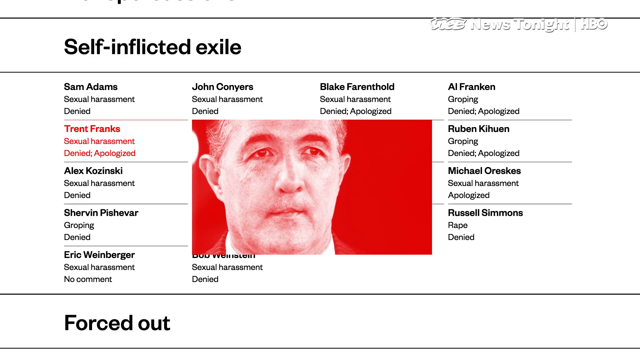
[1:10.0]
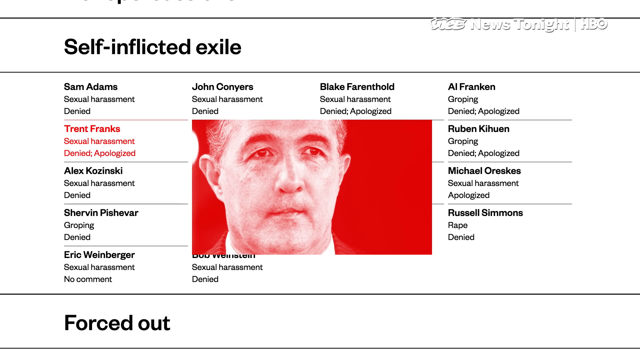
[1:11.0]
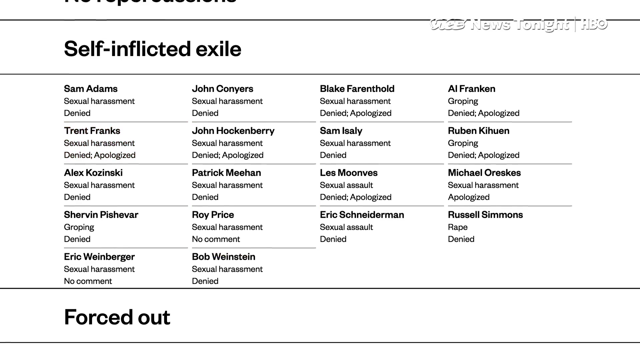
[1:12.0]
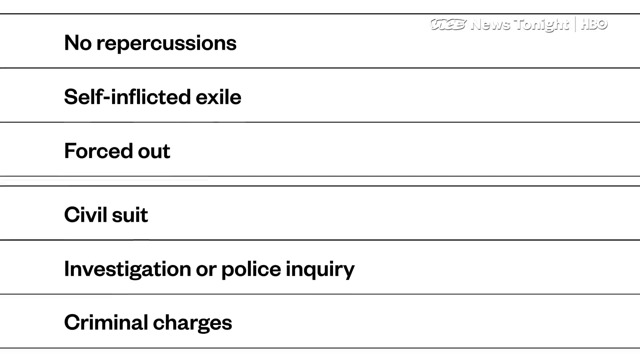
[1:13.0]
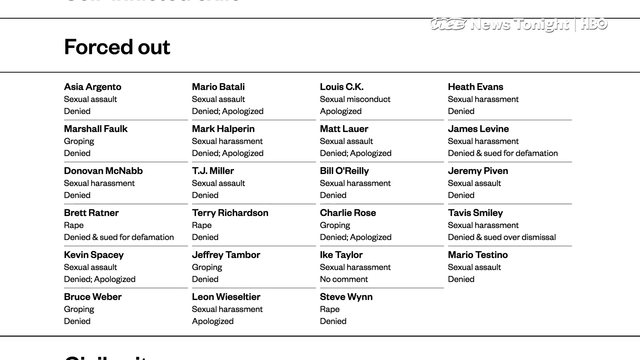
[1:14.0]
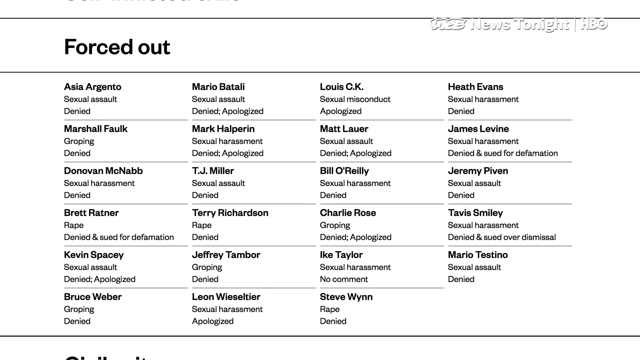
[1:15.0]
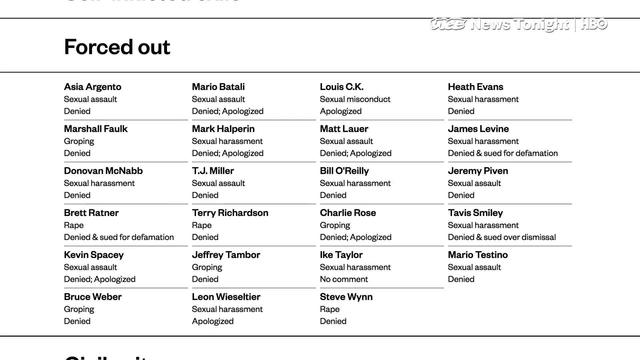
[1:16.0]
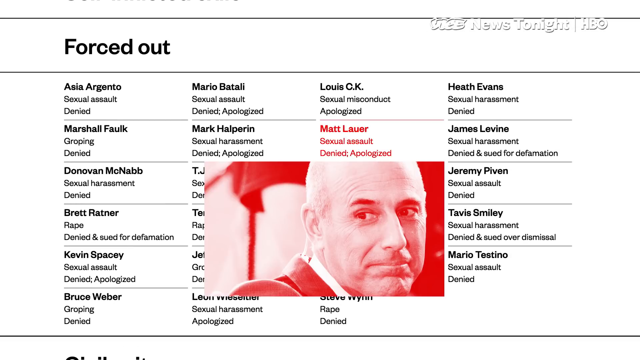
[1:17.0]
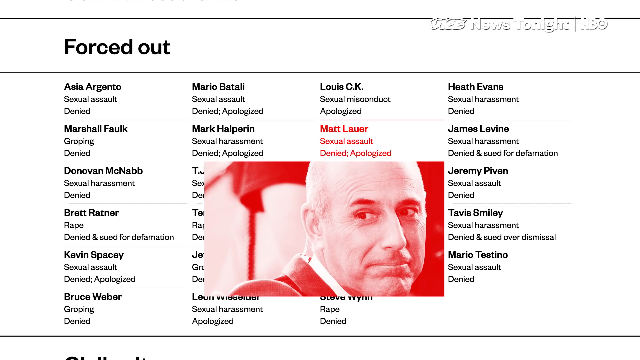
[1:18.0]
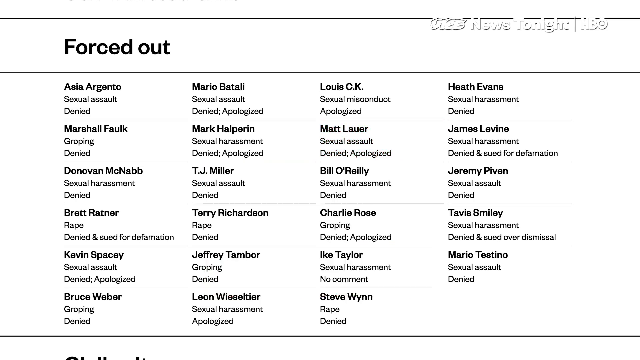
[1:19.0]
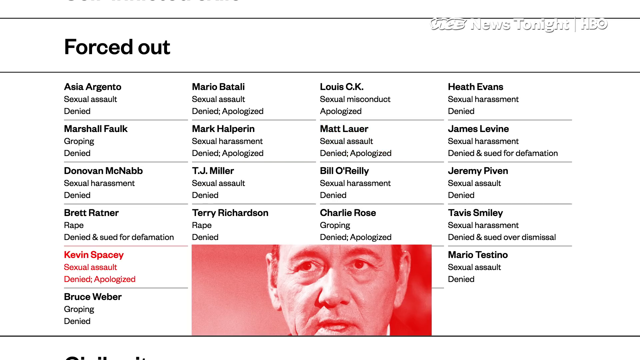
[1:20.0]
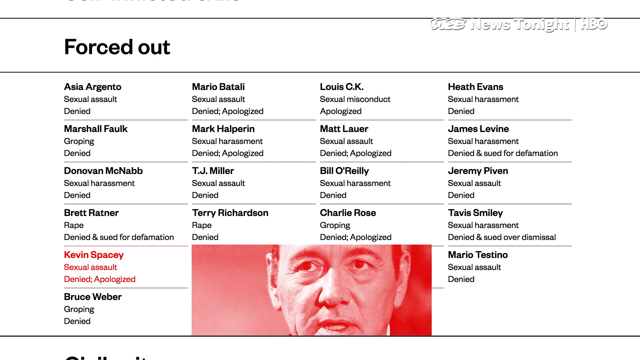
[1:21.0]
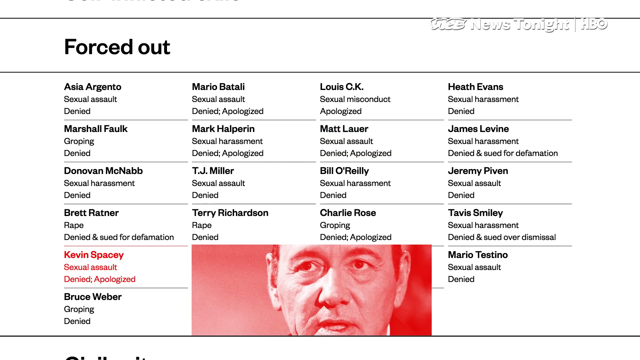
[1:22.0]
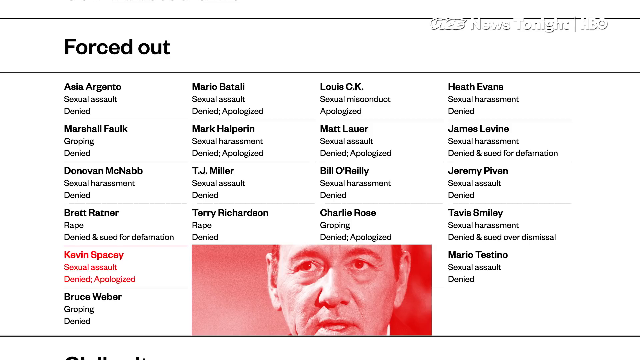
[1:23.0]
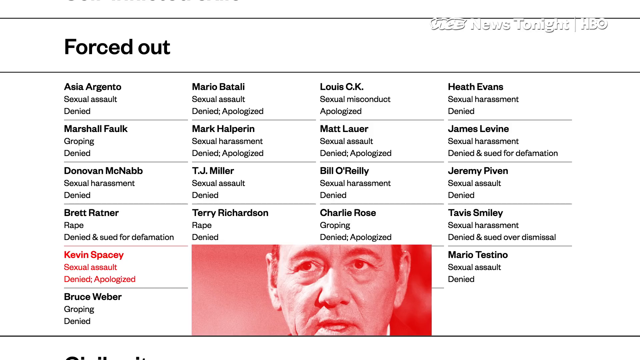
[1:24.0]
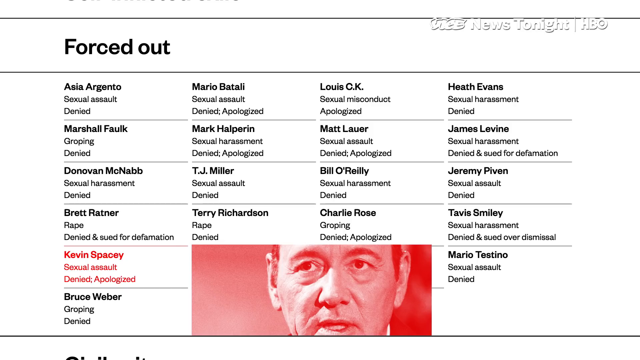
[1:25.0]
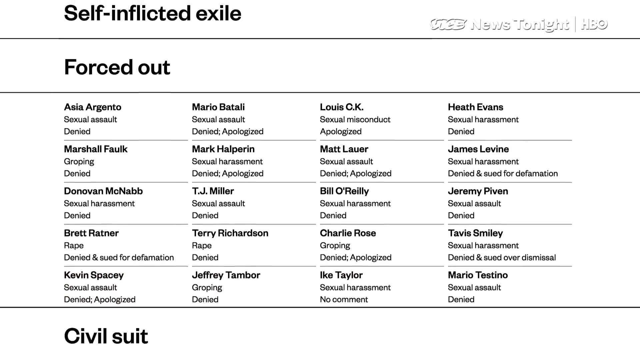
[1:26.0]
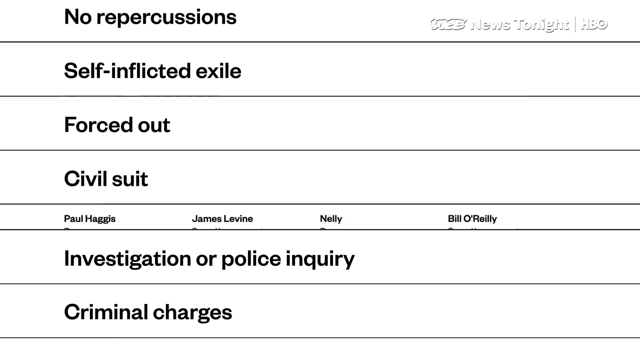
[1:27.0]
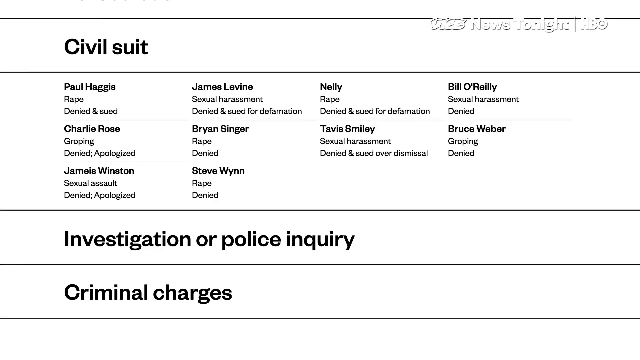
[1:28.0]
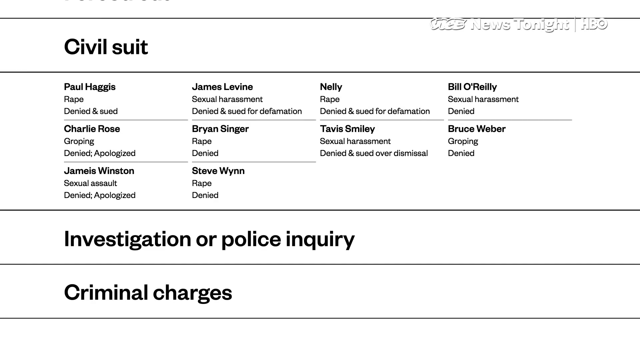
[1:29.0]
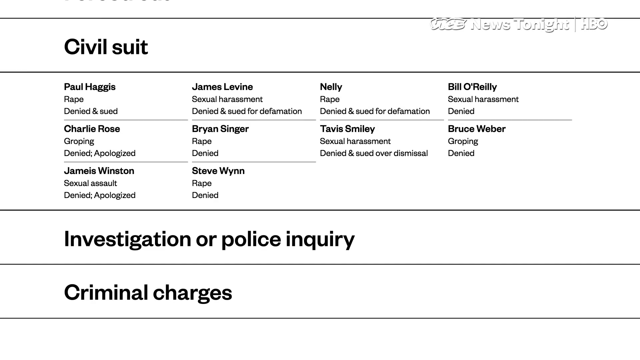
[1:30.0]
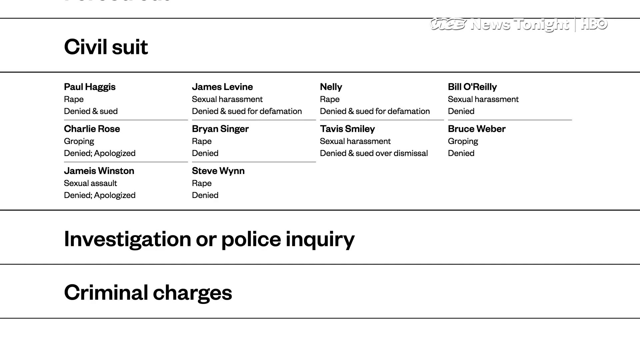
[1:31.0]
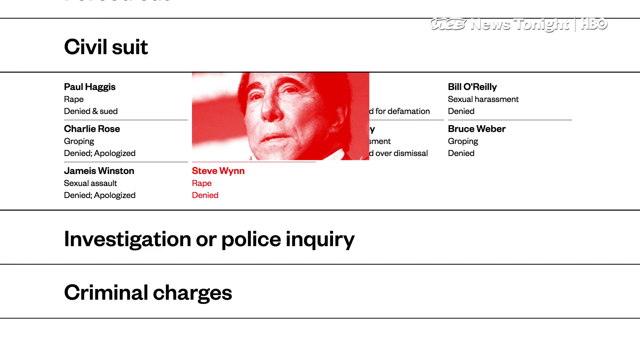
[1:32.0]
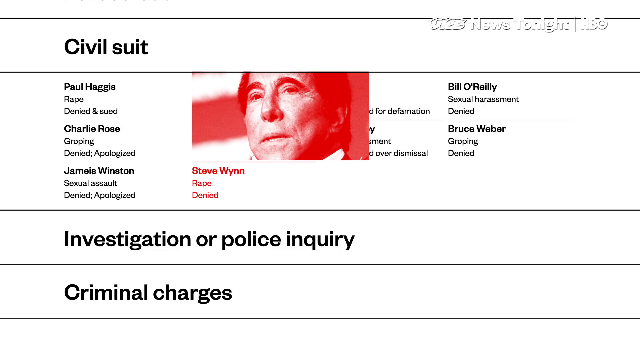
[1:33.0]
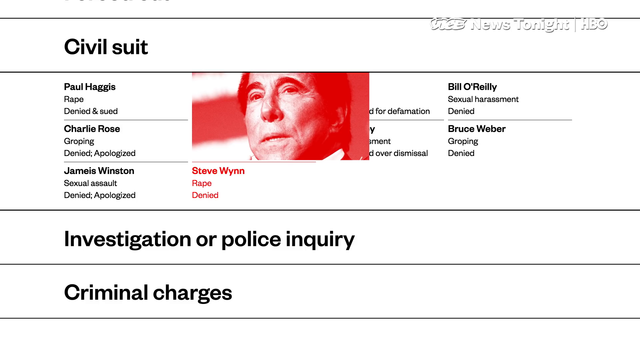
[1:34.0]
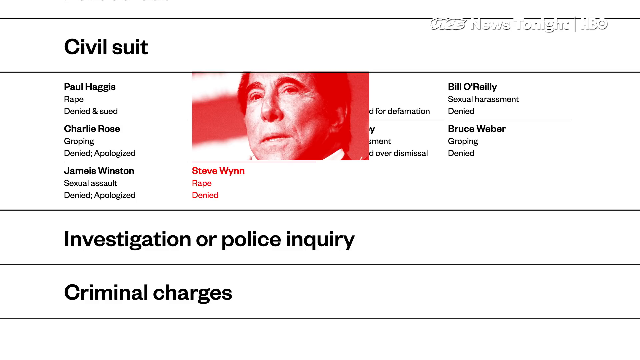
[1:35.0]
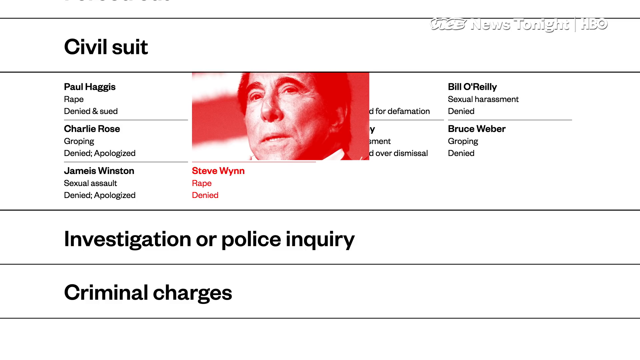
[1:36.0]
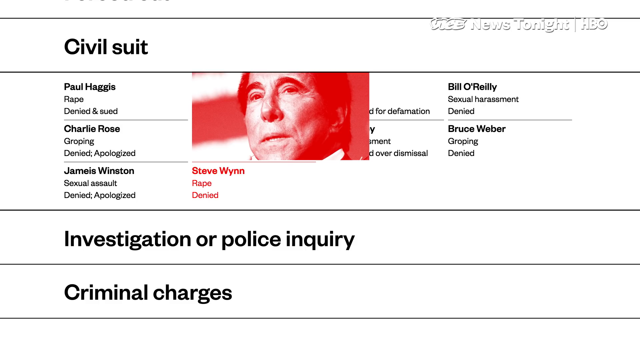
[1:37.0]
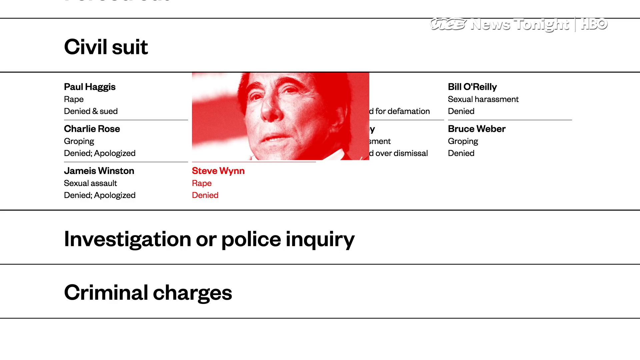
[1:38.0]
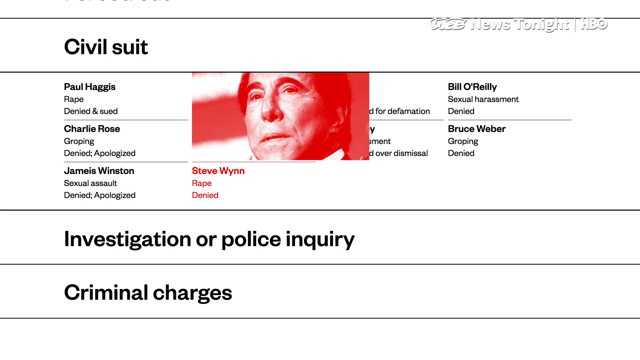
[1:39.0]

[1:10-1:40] After the photograph of Trent Franks, that list disappears and the "forced out" caption opens with another series of names: Asia Argento, Marshall Falk, Donovan McNabb, Brett Ratner, Kevin Spacey, Bruce Weber, Maria Batali, Mark Halperin, TJ Miller, Terry Richardson, Jeffrey Tambor, Leon Wieseltier, Louis CK, Matt Lauer, Bill O'Reilly, Charlie Rose, Mike Taylor, Steve Wynn, Heath Evans, James Levine, Jeremy Piven, Tavish Smiley and Mario Testino. Matt Lauer is highlighted in red and a red-and-white monochrome photograph shows him looking at the camera or over his shoulder. Kevin Spacey is then highlighted, with a similar red-and-white monochrome photograph of him looking slightly up to his right. That list closes and "civil suit" opens with the names Paul Haggis, Charlie Rose, James Winston, James Levine, Brian Singer, Steve Wynn, Nelly, Tavis Smiley, Bill O'Reilly and Bruce Weber. Steve Wynn is highlighted and his face appears in red-and-white monochrome, facing to the viewer's left and looking to his left.